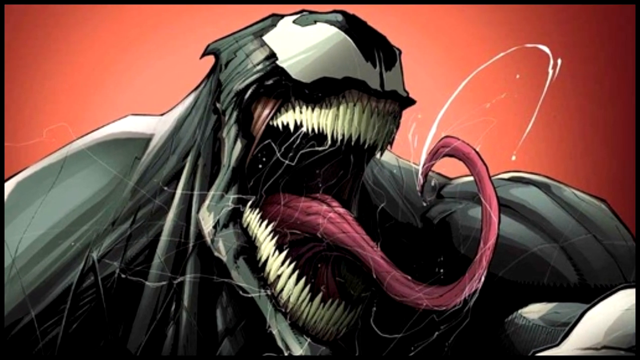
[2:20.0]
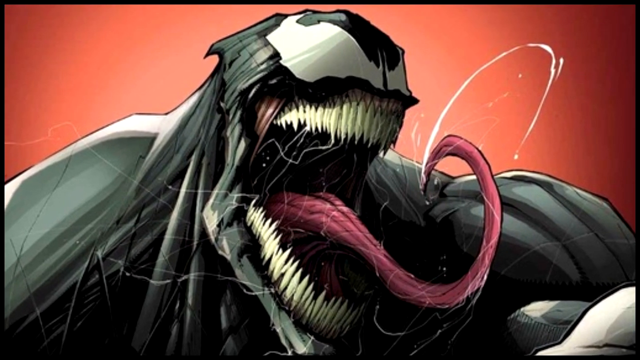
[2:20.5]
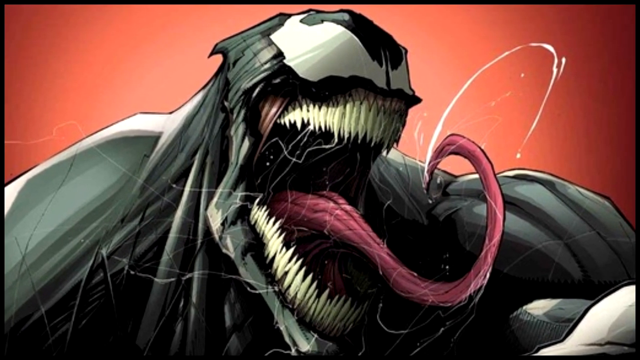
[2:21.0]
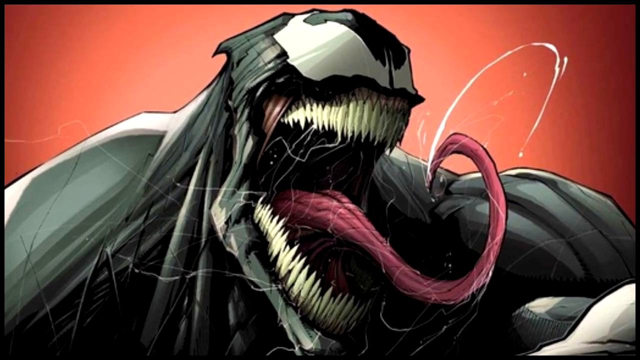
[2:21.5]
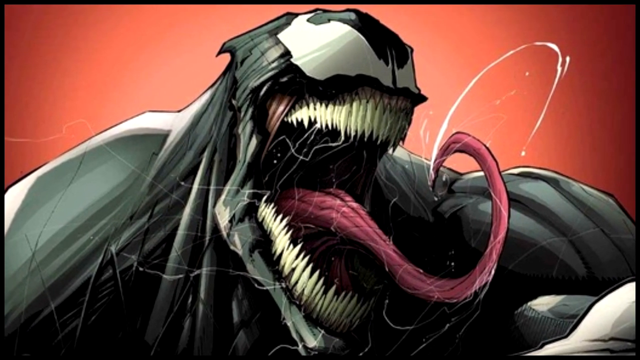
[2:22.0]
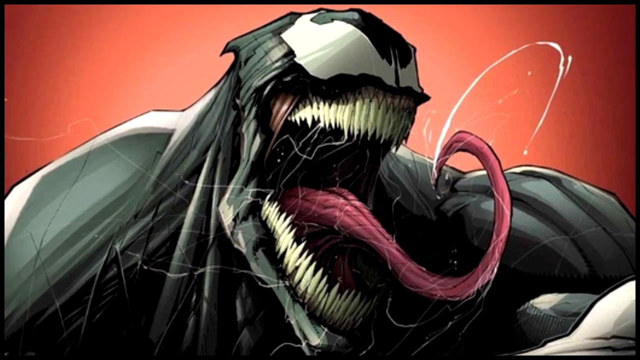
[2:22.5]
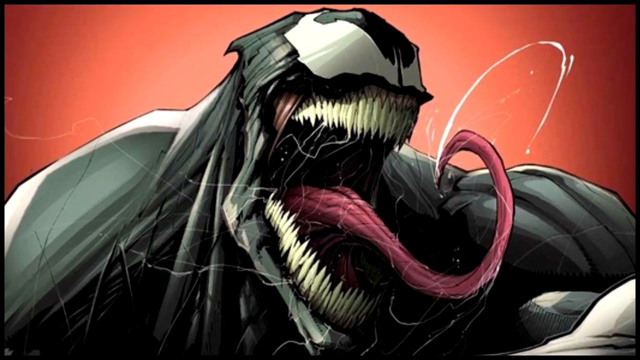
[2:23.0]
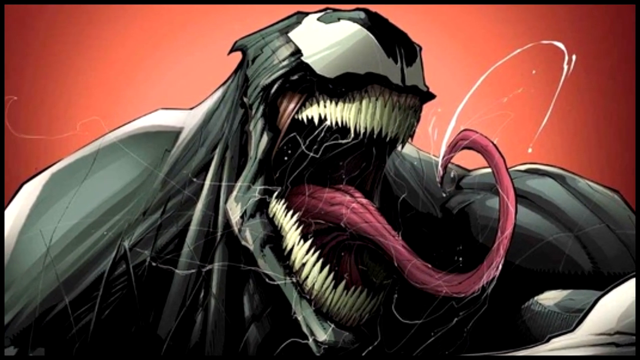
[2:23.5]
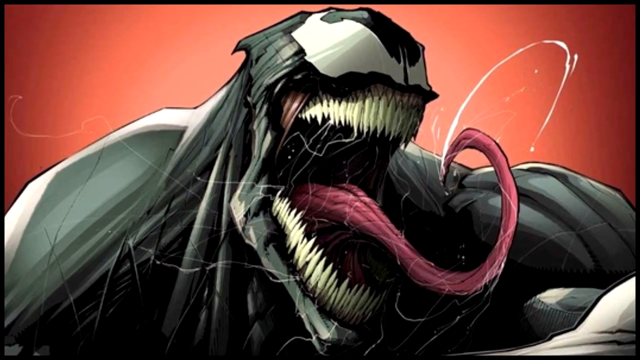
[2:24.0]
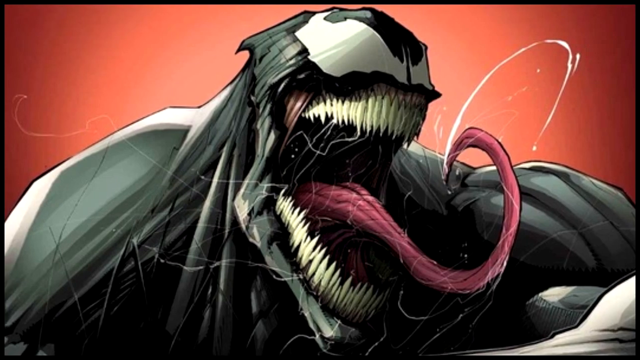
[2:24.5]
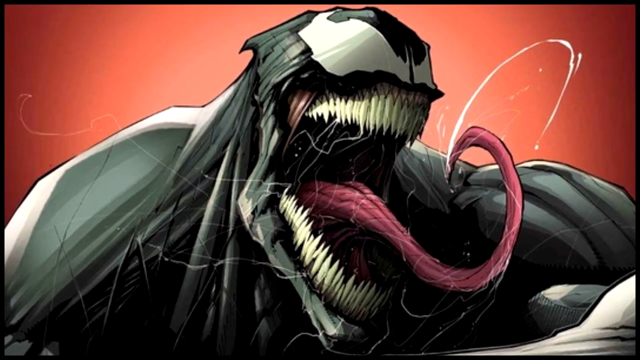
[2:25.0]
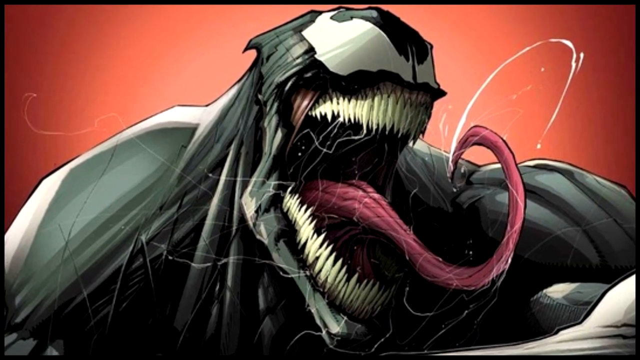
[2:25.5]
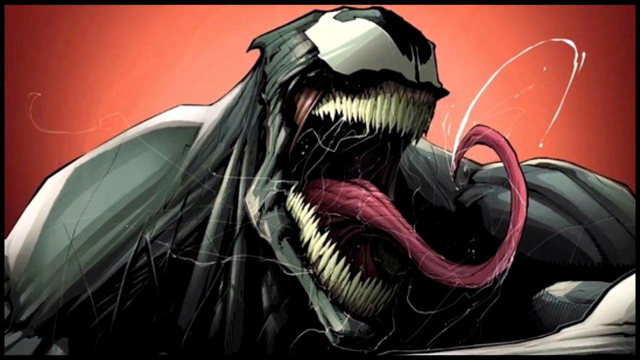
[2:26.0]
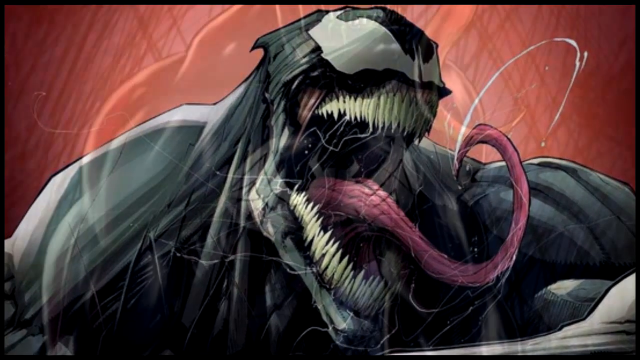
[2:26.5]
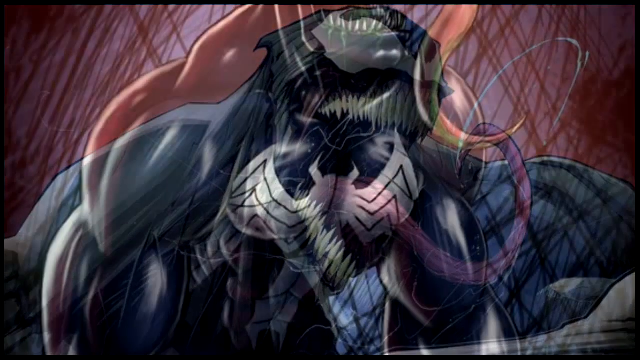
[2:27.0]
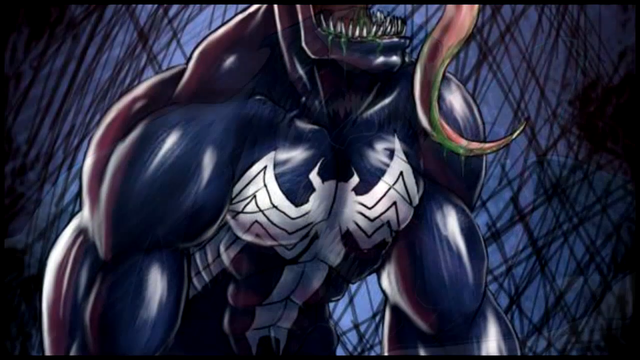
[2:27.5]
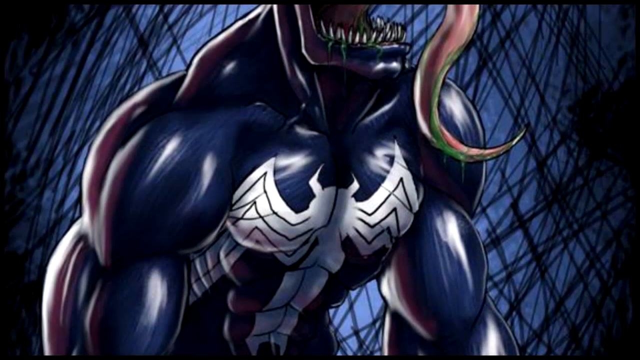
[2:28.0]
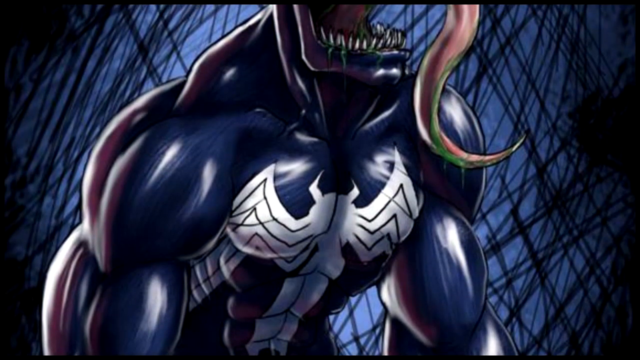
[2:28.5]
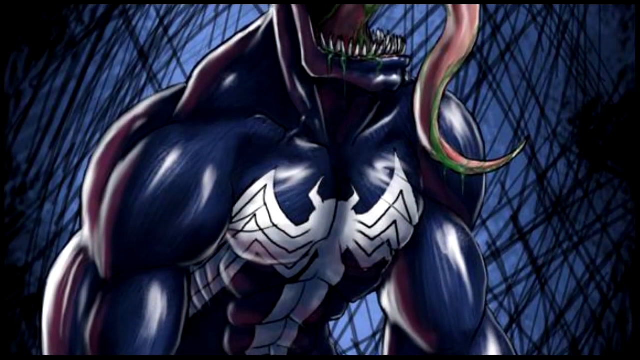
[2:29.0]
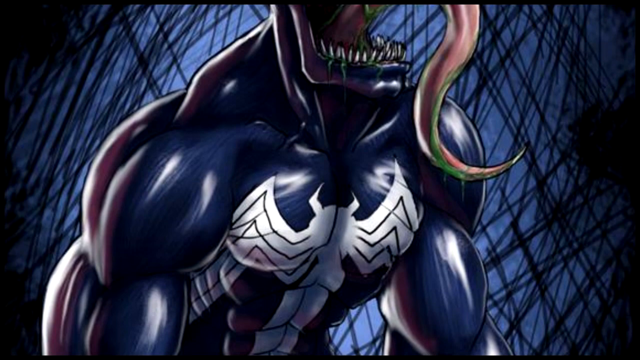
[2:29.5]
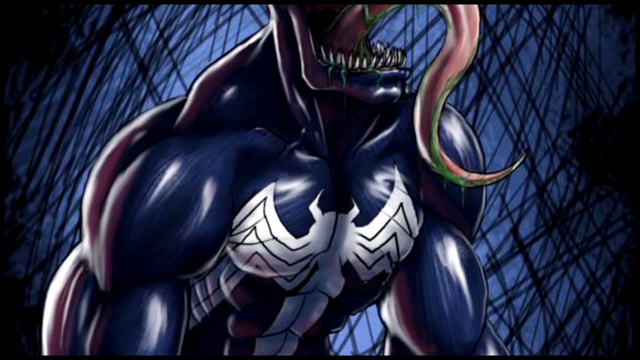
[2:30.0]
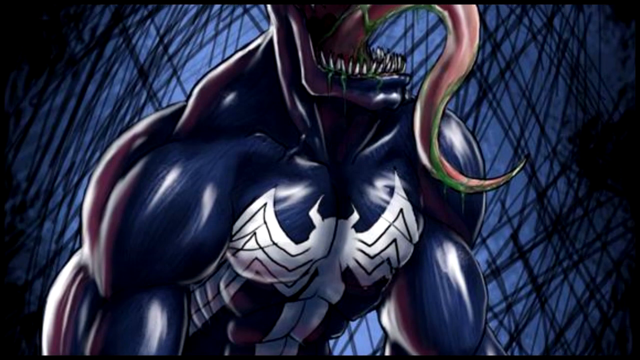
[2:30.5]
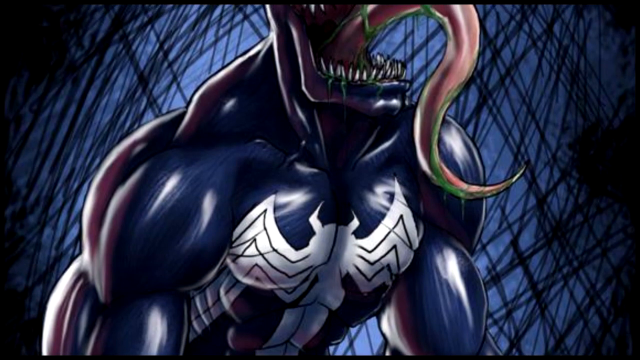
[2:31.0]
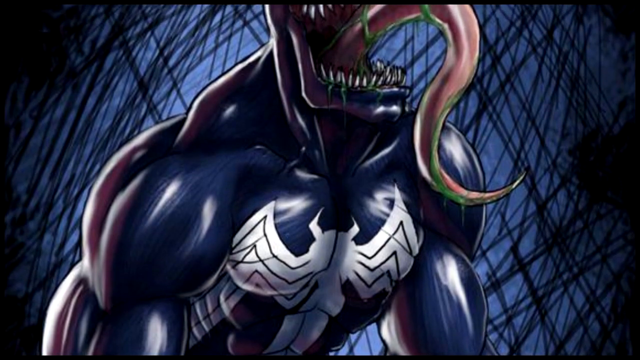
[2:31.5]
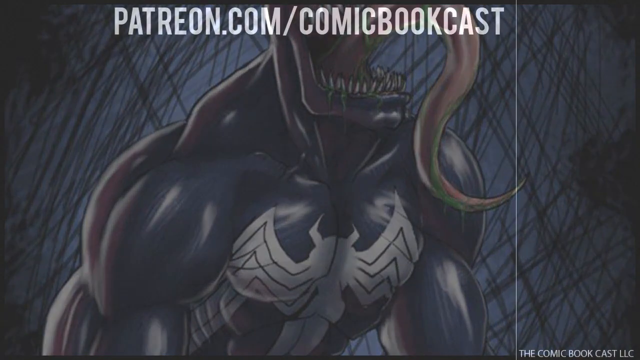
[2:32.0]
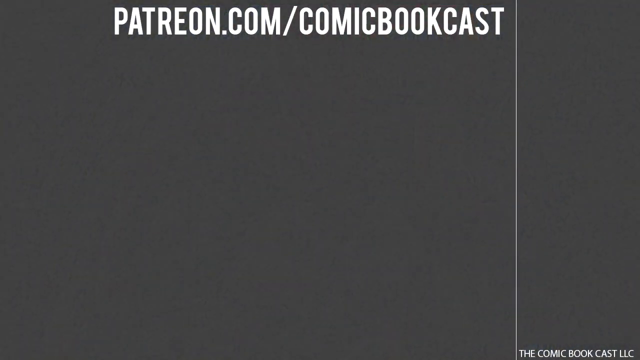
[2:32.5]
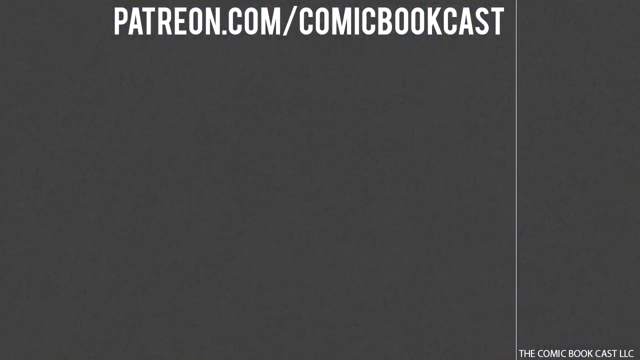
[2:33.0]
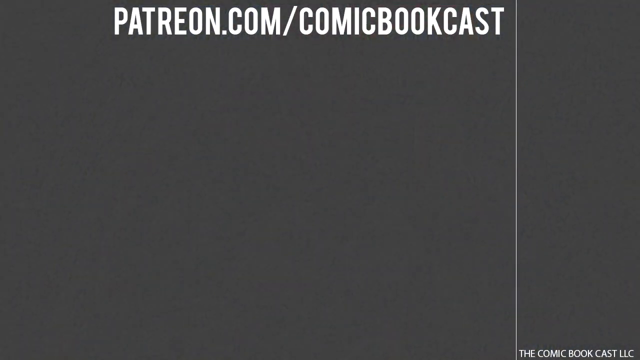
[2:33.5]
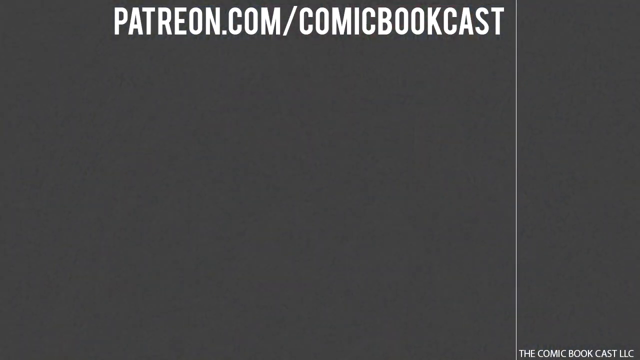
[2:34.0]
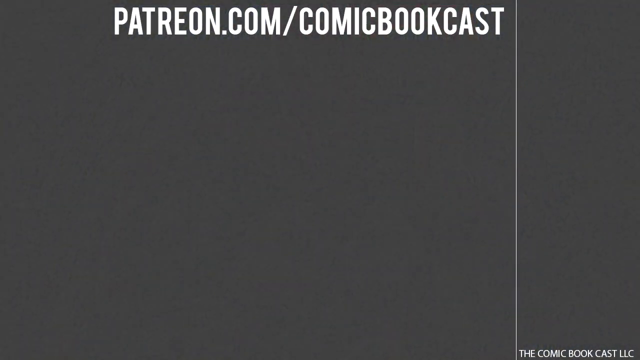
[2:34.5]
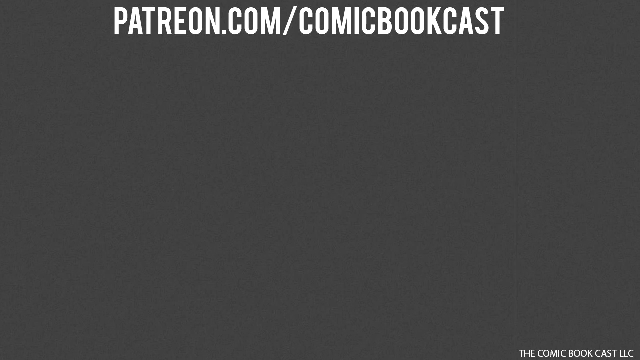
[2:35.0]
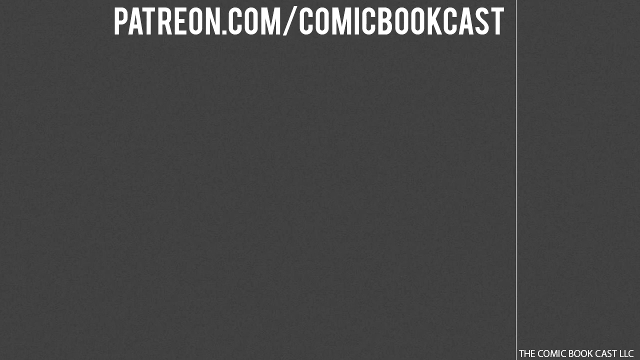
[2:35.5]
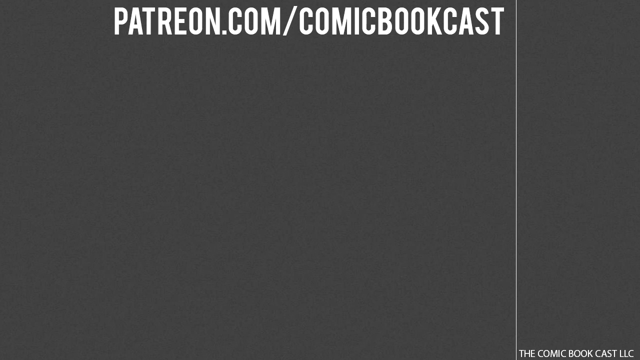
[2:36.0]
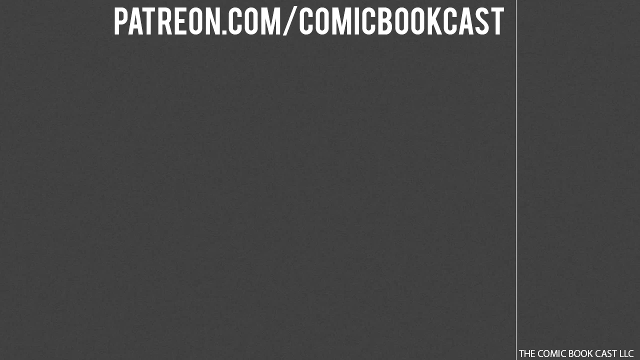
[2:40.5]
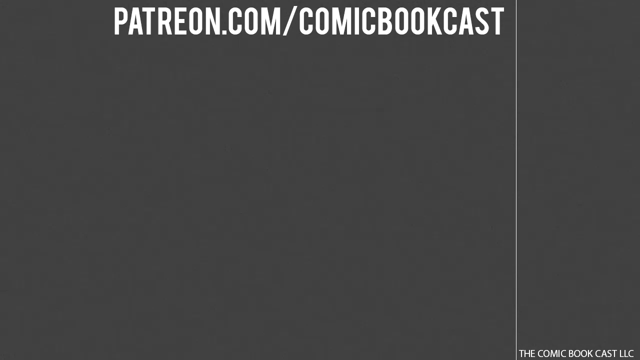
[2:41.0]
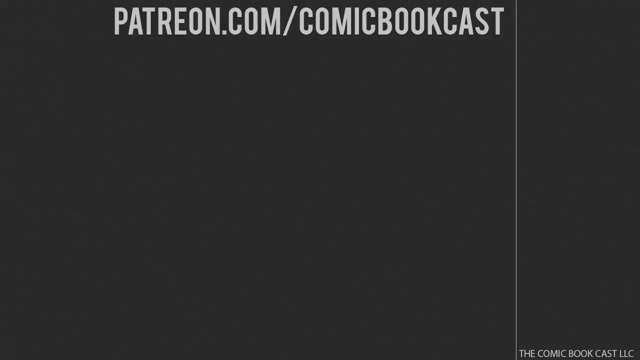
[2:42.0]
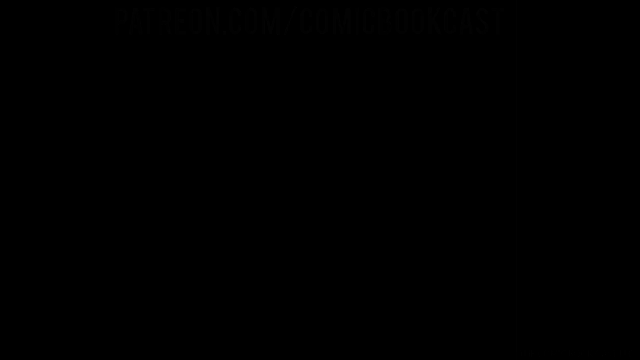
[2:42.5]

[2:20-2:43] The background is a circular red gradient, light red in the middle, then a brighter red, then a blackish red at the edges. In the foreground is a hand-drawn Venom creature whose body is shades of grey, with the chest looking black, possibly because of the shadow cast by the rest of the body. The mouth is open and the head is turned to the frame's right, the creature's left, so the head and jaw are seen from the right side. Sharp razor fangs are packed one next to the other along the top and bottom jaw lines. Spit flies in all directions. The tongue, thicker at the base and dark pink, whips out in an upward curved shape, and a thick piece of spit flies off its tip in a circular shape.